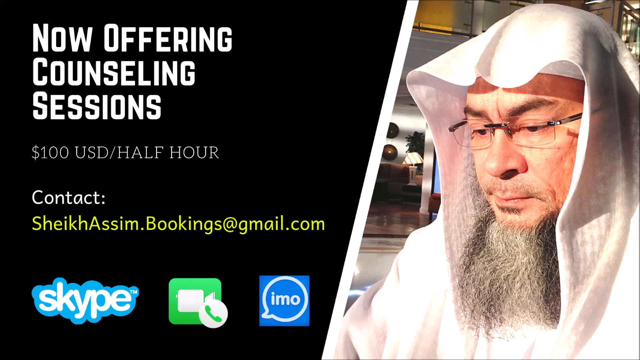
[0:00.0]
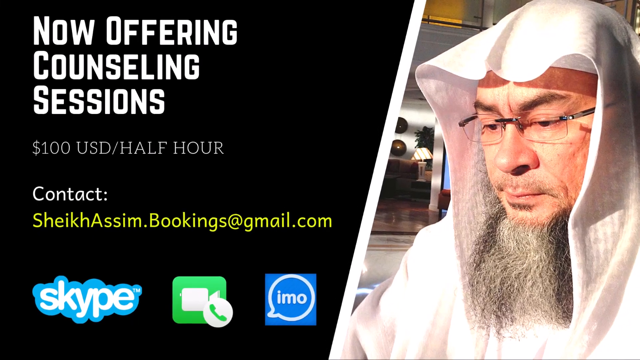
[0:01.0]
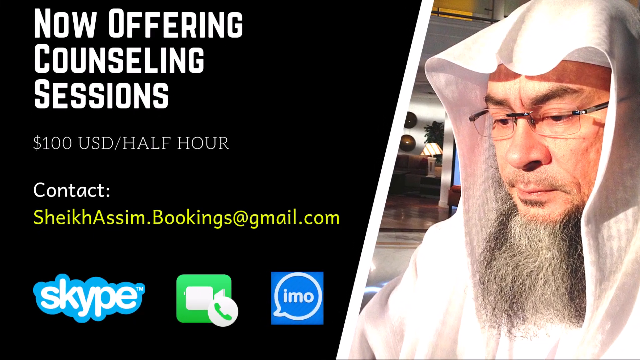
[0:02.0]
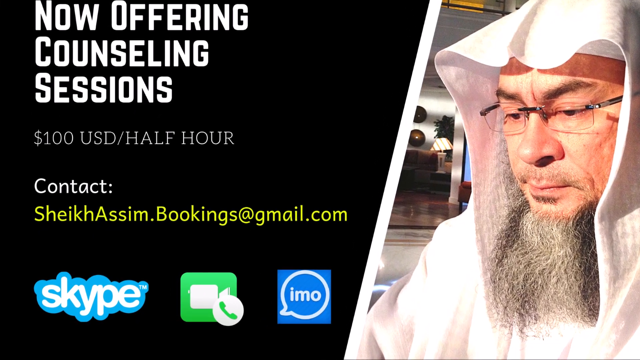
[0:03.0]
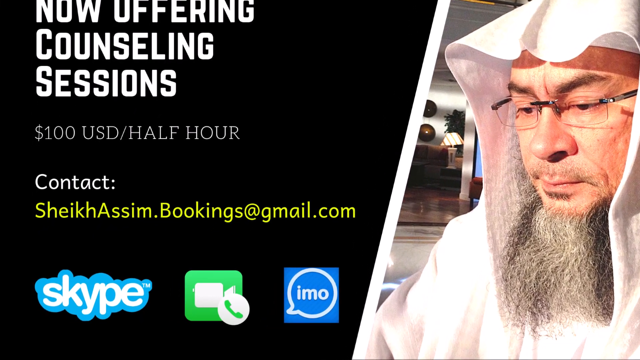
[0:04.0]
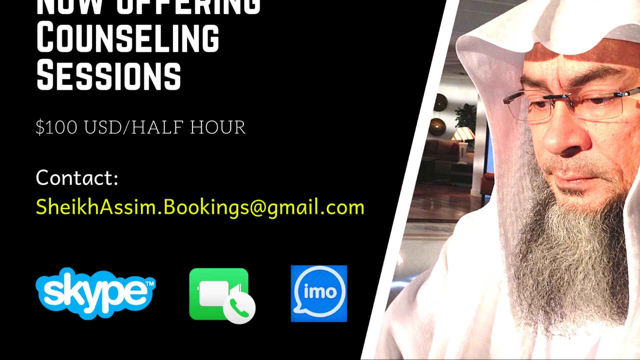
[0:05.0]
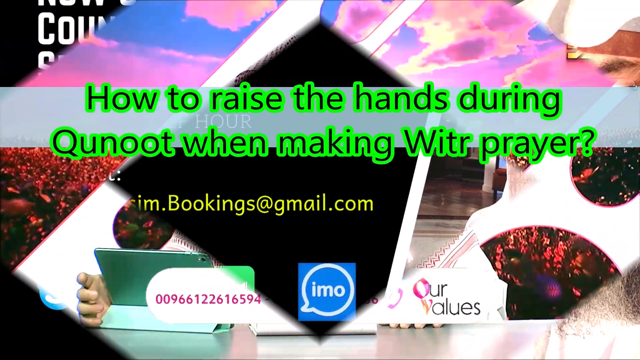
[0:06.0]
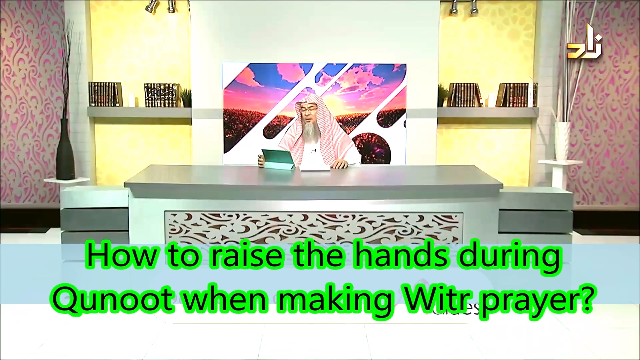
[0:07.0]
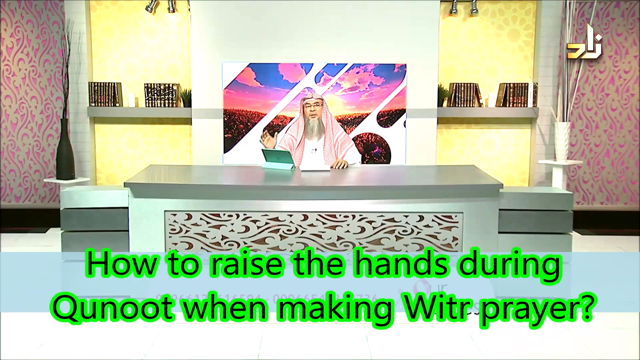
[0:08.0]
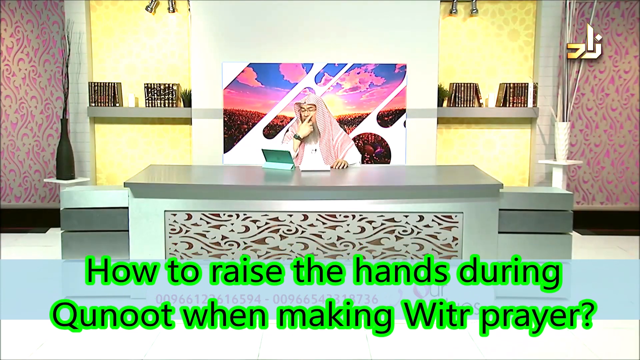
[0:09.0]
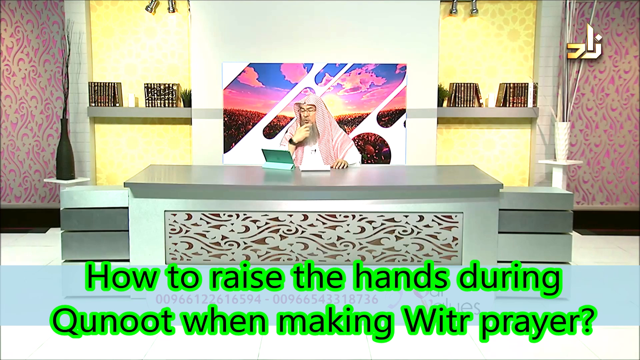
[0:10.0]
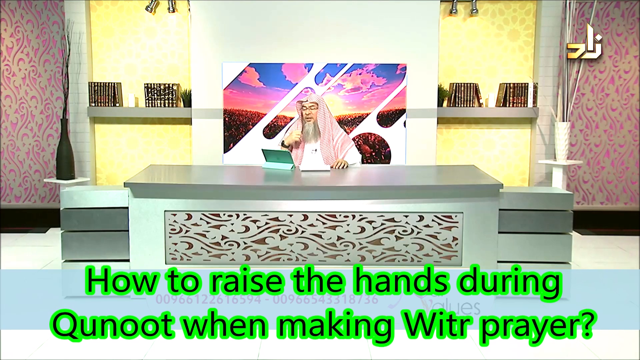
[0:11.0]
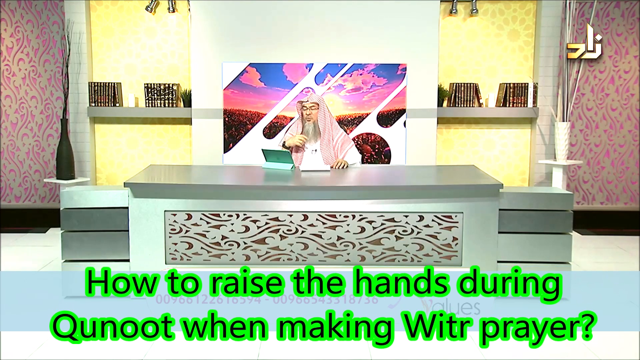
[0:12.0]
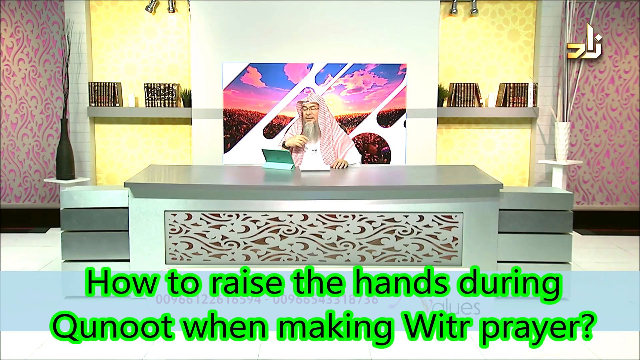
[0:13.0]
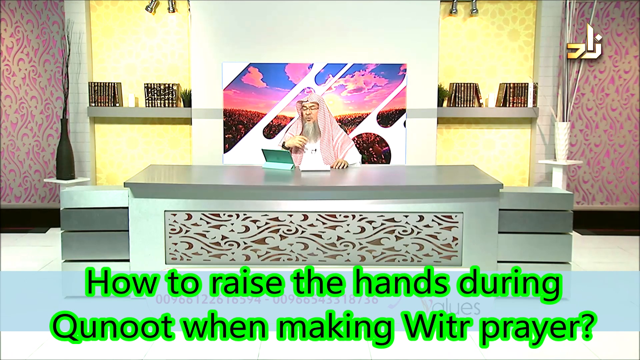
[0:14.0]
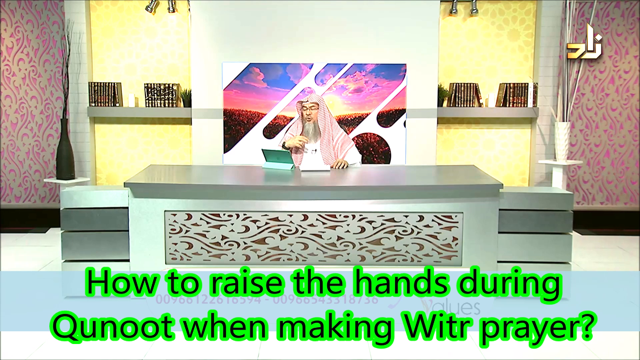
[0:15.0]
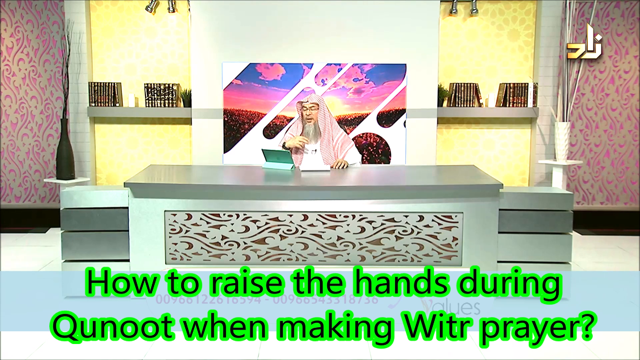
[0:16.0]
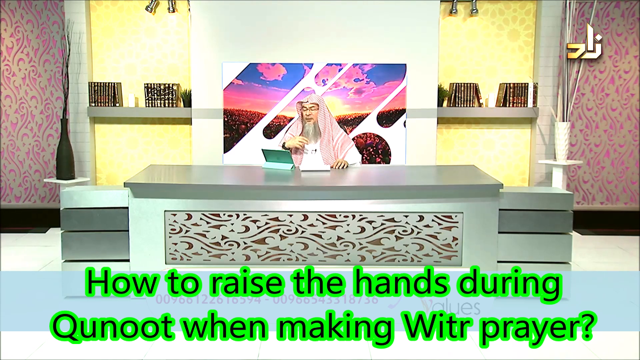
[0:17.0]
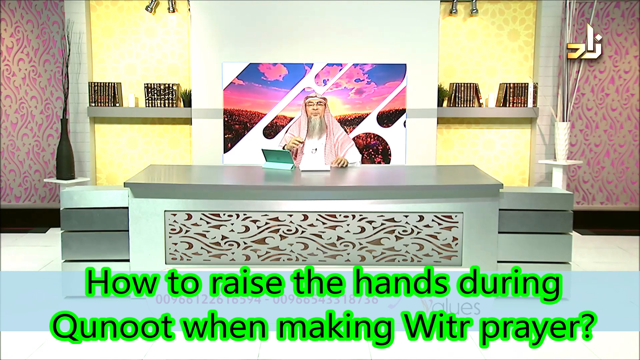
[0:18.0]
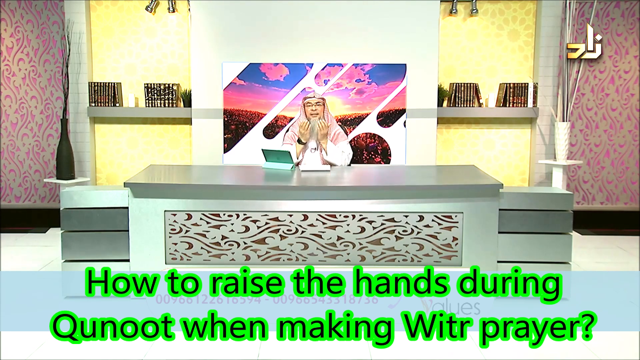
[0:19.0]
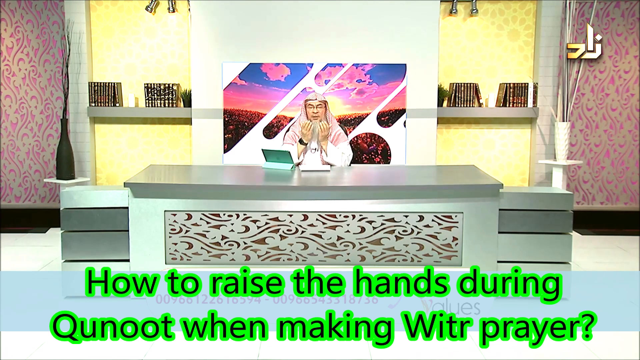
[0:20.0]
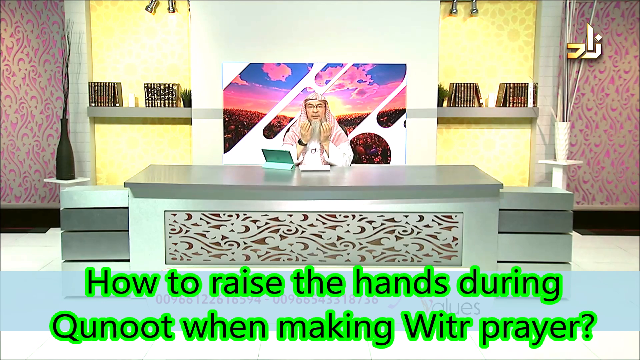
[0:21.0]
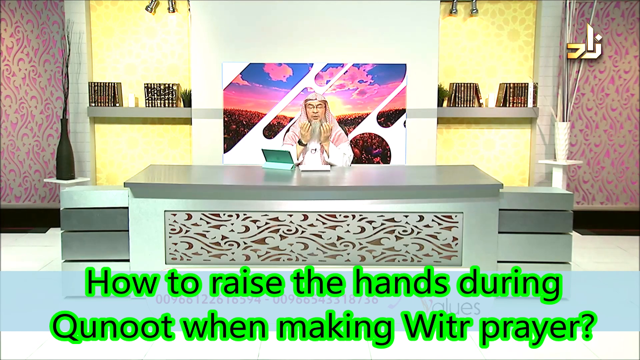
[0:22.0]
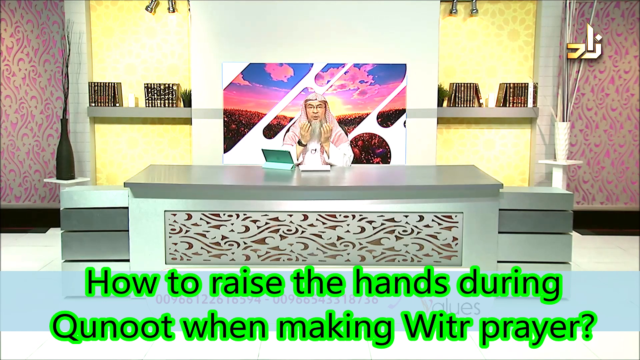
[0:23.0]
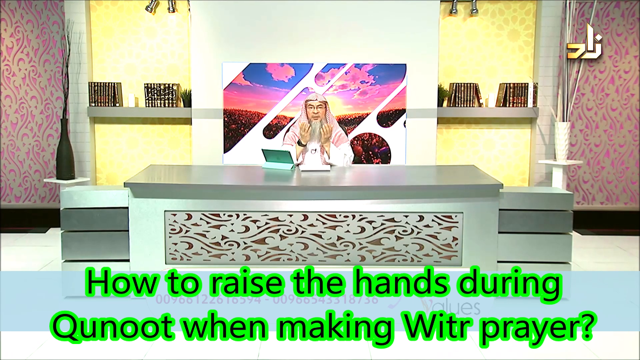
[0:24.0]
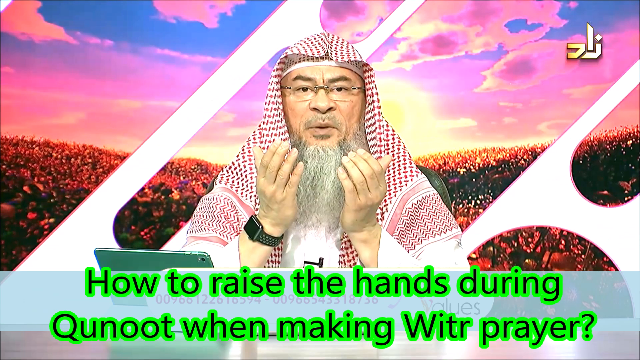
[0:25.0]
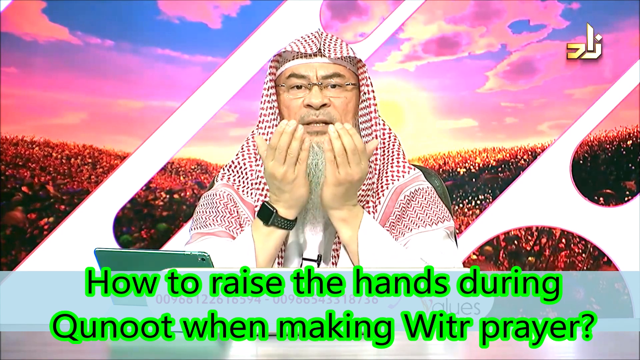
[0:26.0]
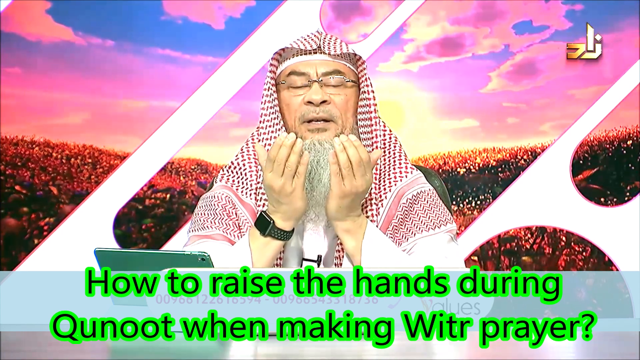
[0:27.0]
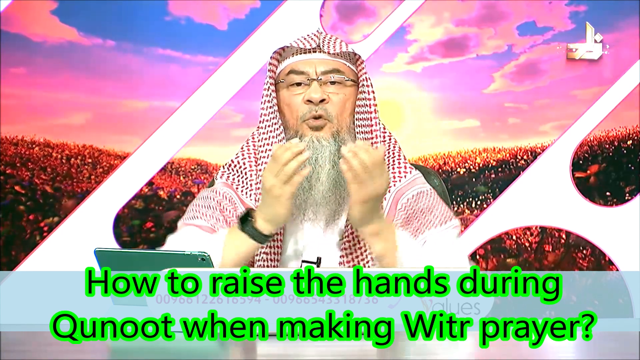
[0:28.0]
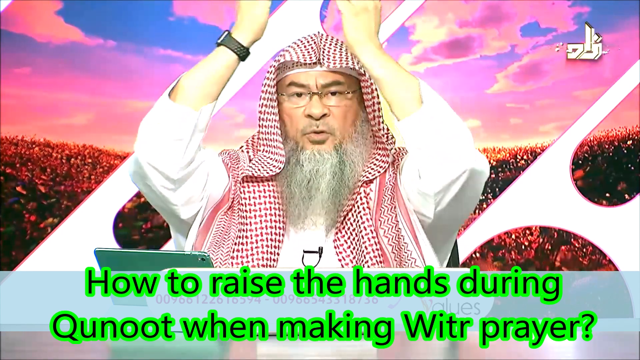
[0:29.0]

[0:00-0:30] A screen shows a picture of what appears to be an Islamic religious figure, with text reading "now offering counseling sessions, 100 USD for half an hour, contact". Below that is an email address in yellow text, "shakeaseem.bookings at gmail.com", and below the email are the available options: Skype, FaceTime, and something called IMO. The video then transitions to what appears to be a recording of this sheikh. A caption at the bottom of the screen reads "how to raise the hands during qunoot, when making witr prayer". He appears to be talking, possibly on a TV show, and is answering this religious question. He is sitting in front of a desk, with a yellow wall behind him that is surrounded by a pink and white wall. There are some books on the shelf and two vases.